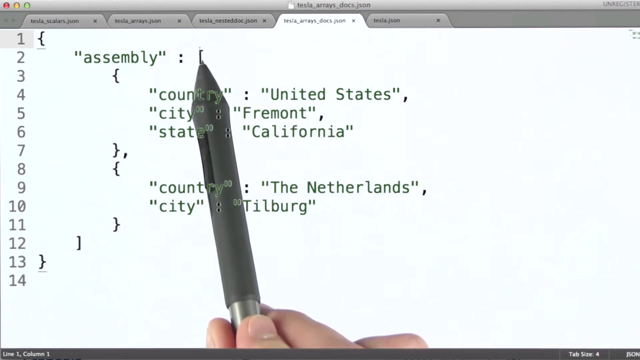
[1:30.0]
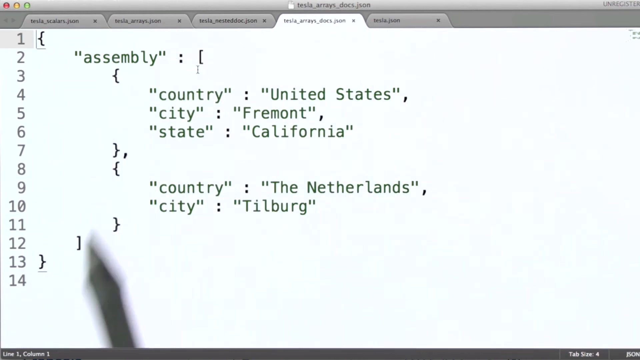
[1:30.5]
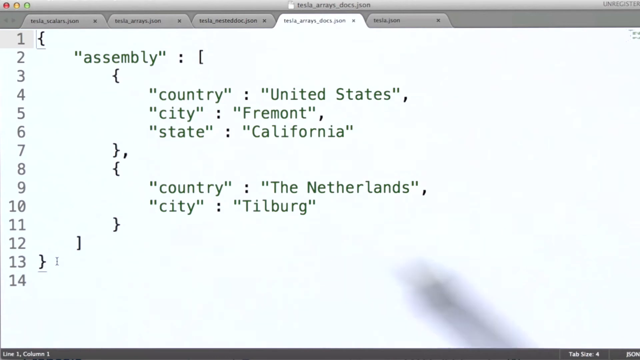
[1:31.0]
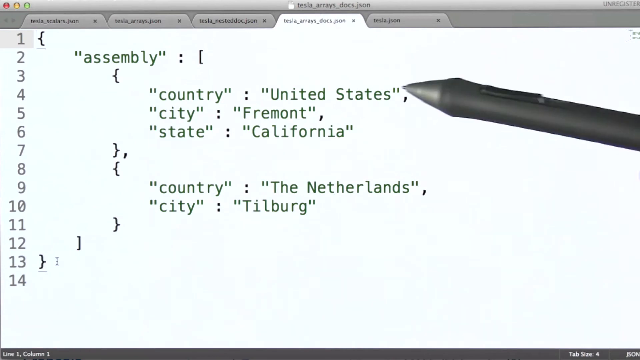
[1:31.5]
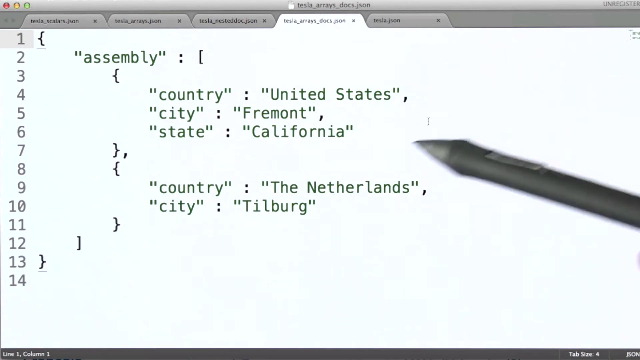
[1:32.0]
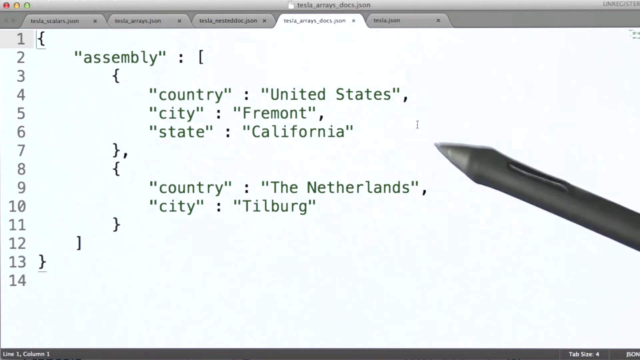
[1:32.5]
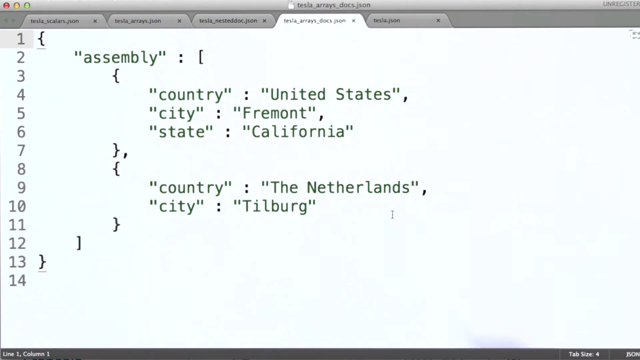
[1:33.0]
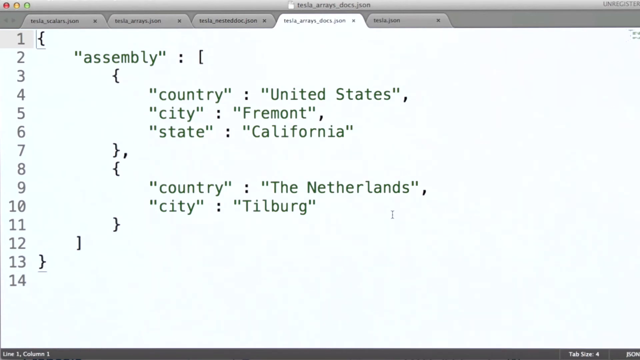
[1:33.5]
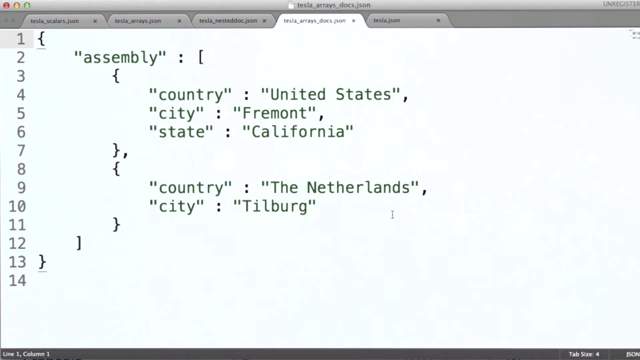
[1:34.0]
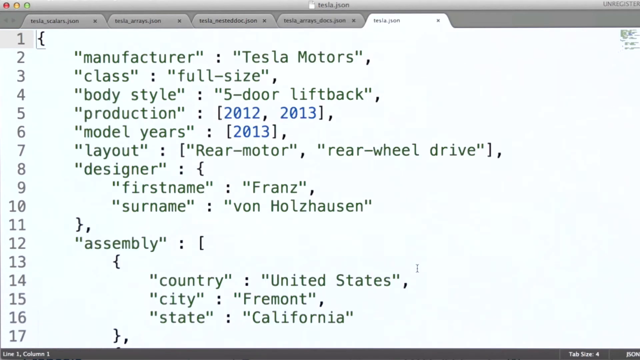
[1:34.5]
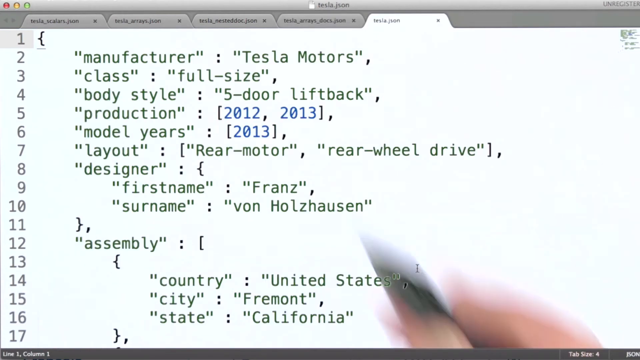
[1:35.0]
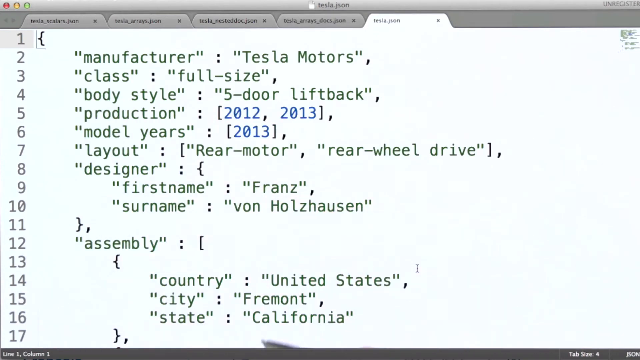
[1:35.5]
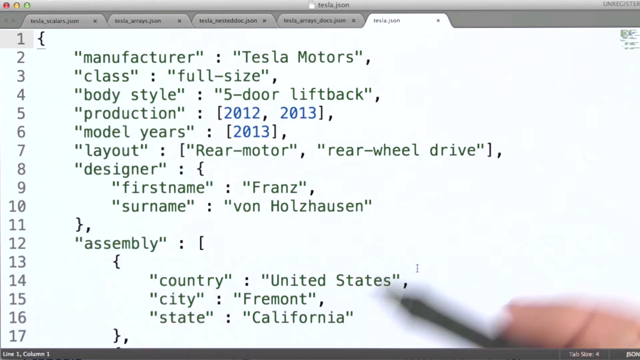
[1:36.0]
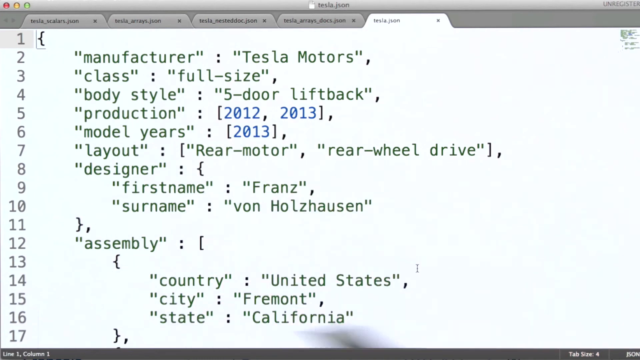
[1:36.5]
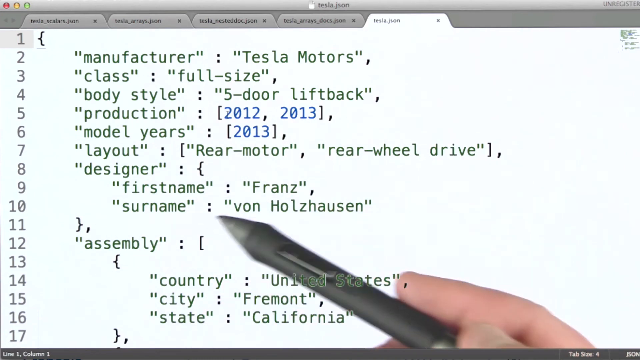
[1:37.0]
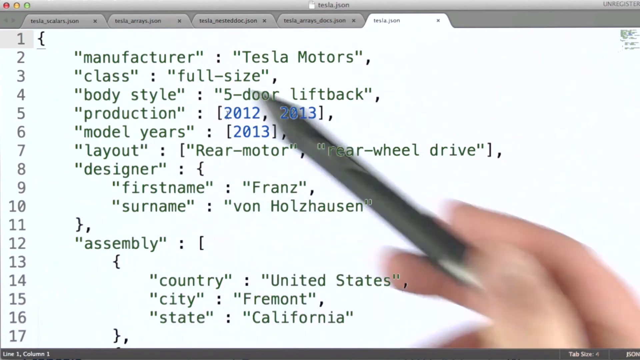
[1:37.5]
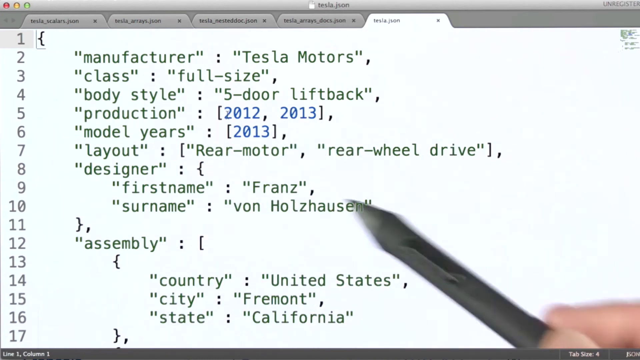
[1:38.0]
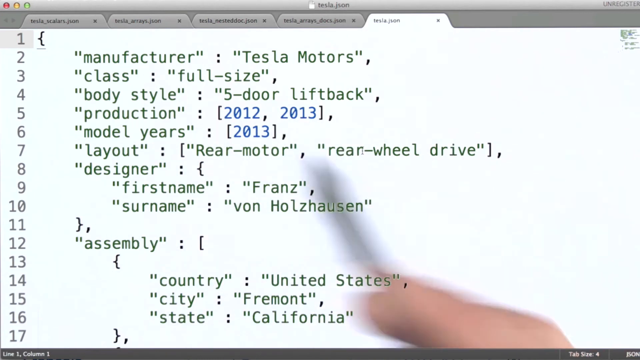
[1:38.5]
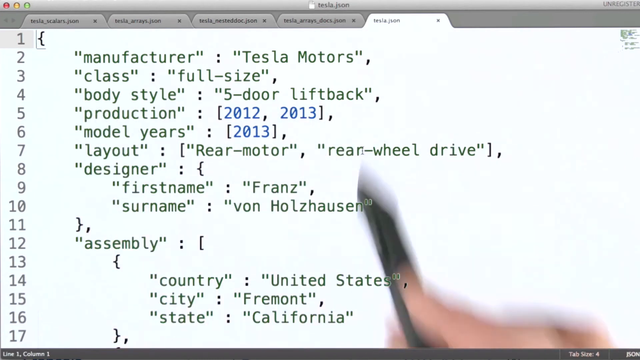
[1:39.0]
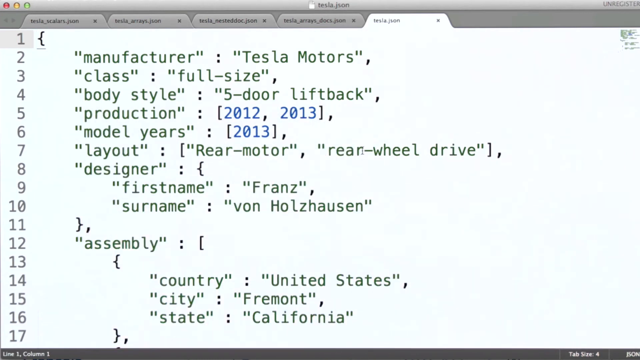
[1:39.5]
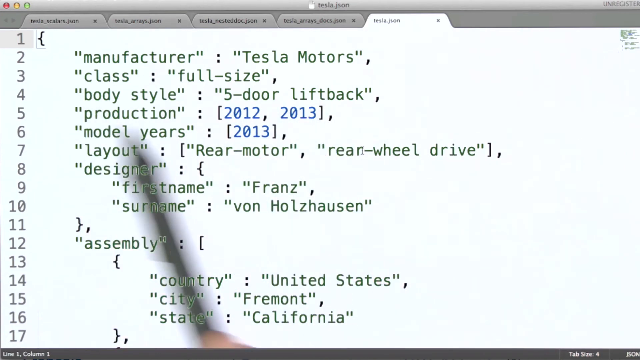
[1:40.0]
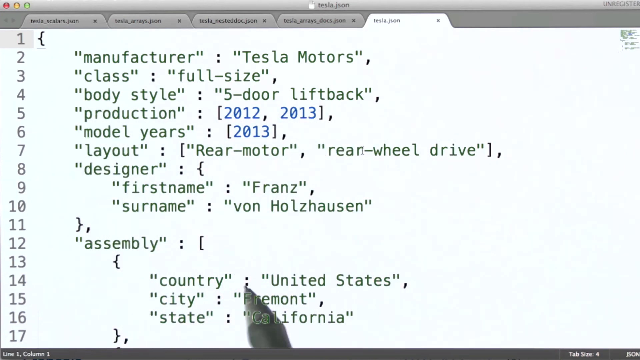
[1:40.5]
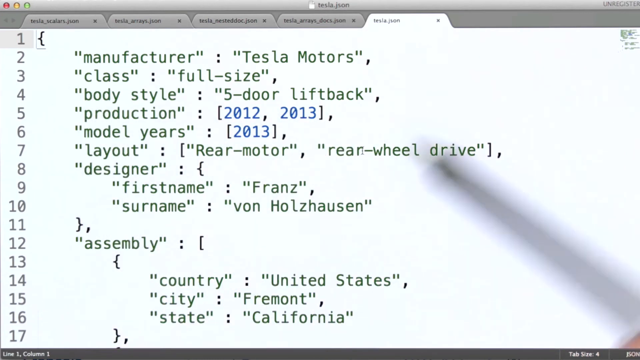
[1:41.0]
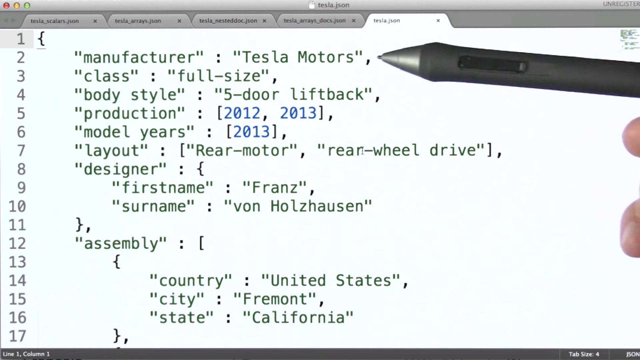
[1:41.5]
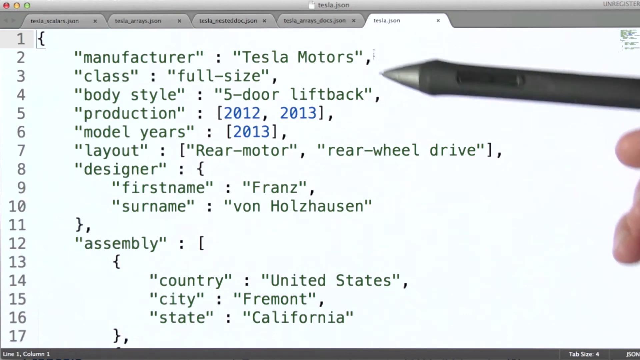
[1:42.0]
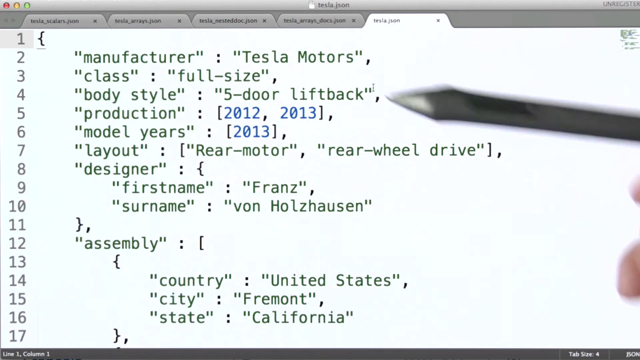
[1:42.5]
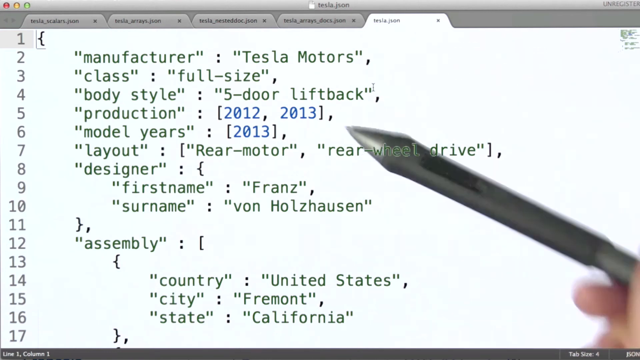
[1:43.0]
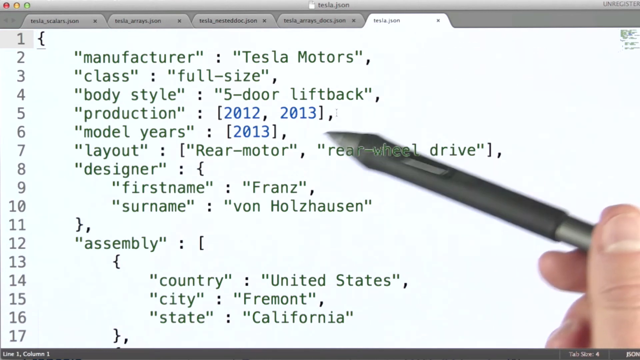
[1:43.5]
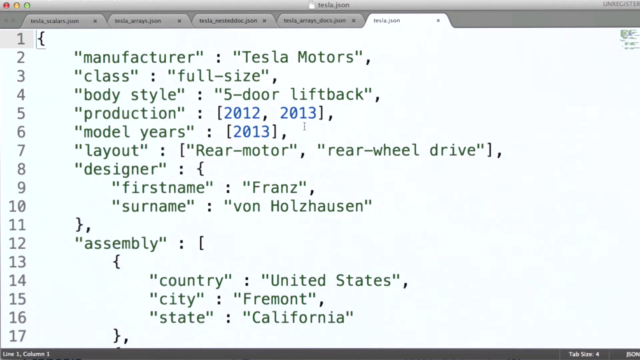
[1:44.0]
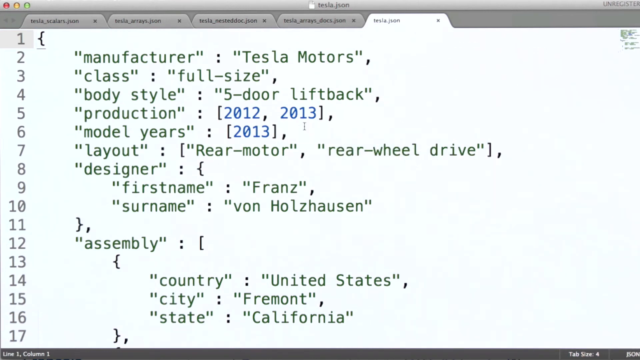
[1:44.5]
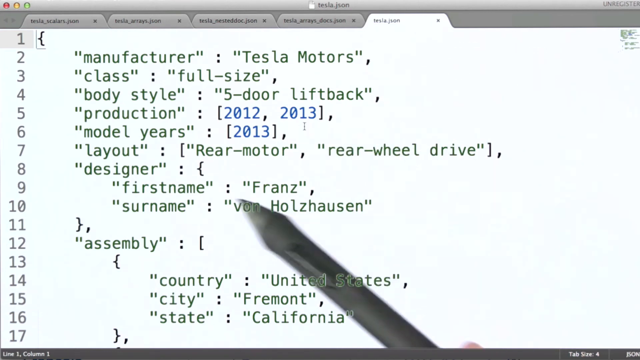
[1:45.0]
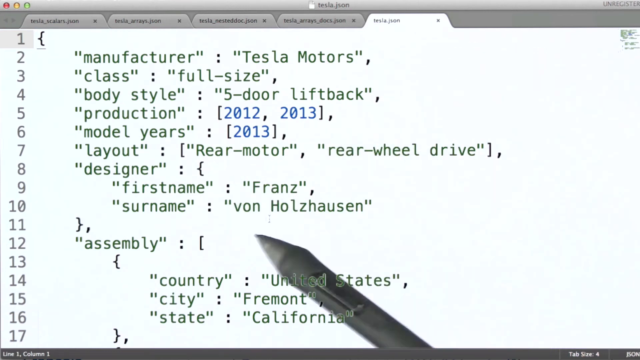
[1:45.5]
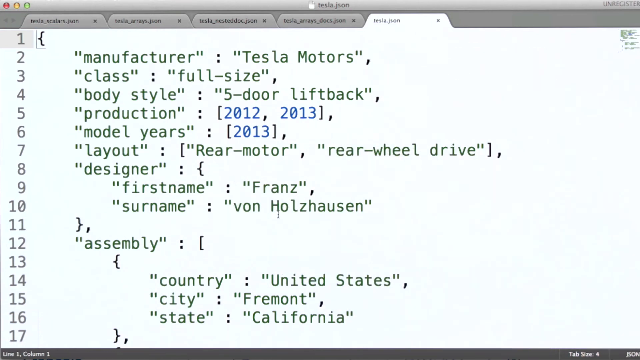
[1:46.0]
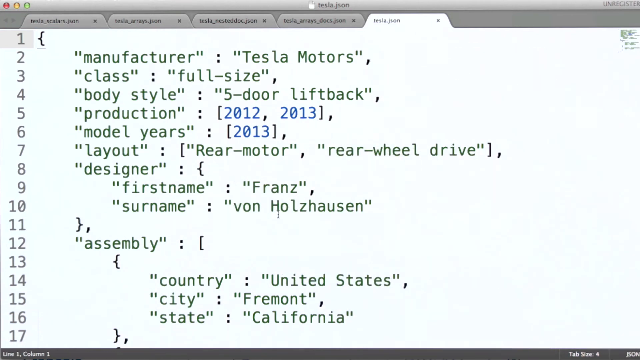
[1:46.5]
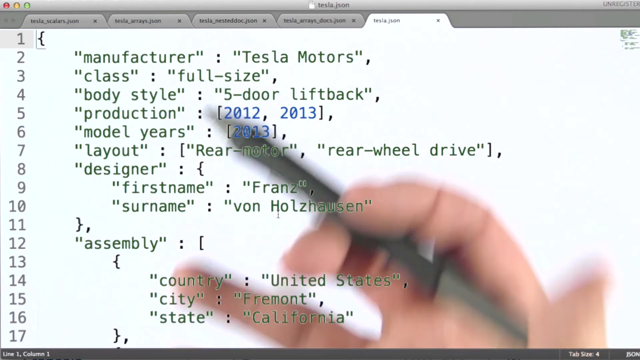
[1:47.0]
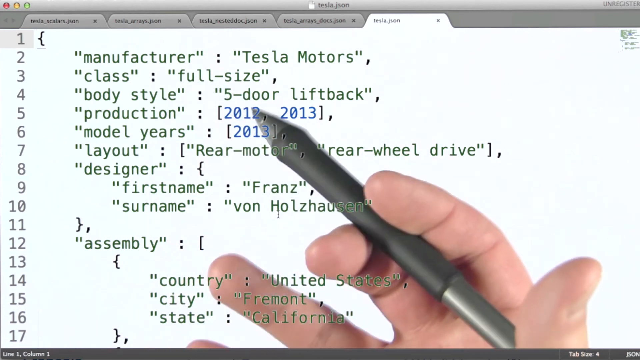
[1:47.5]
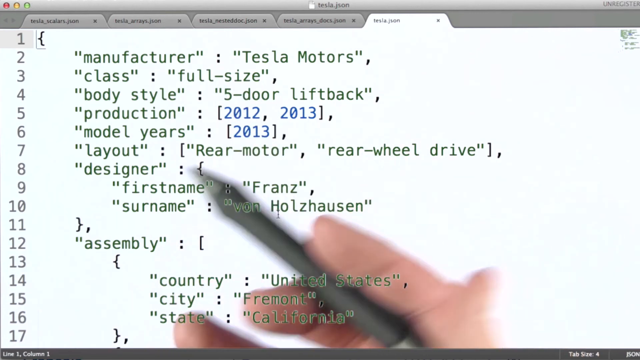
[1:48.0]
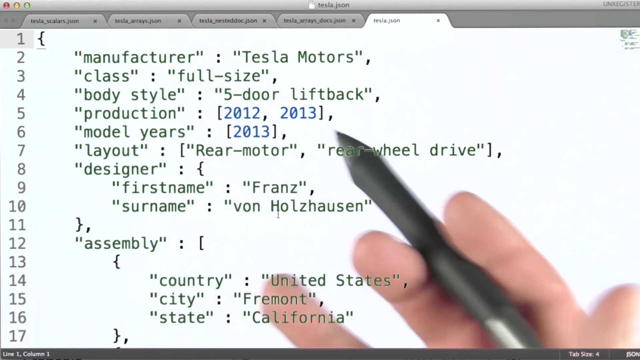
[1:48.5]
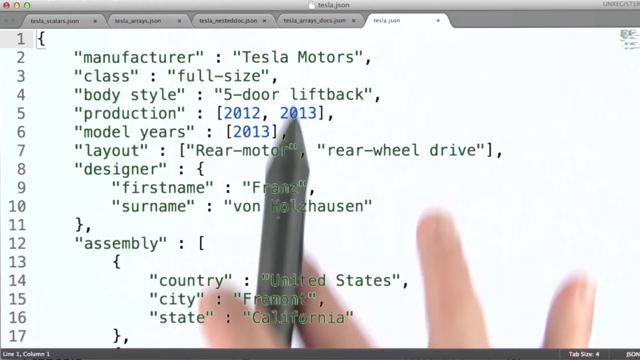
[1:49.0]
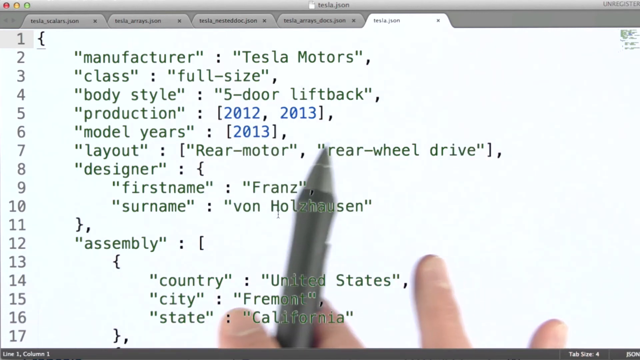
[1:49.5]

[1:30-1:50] The code for the Wikipedia article is viewed more closely, apparently going through the lines again. At the top is "Assembly":, and a couple of lines down "Country": "United States", then "City": "Fremont", then "State": "California". A few lines further down are "Country": "The Netherlands" and then "City": "Tilburg". Then the code appears put together, showing "Manufacturer": "Tesla Motors", "class": "full size", and so on down the lines.